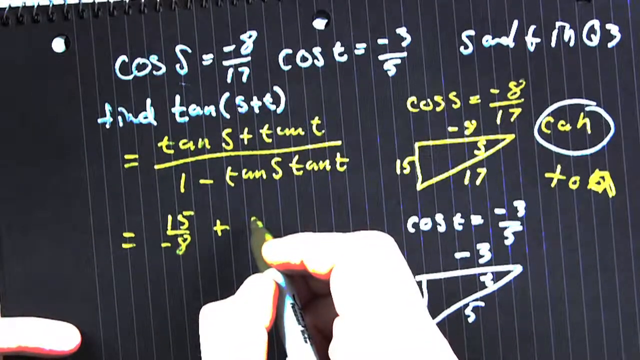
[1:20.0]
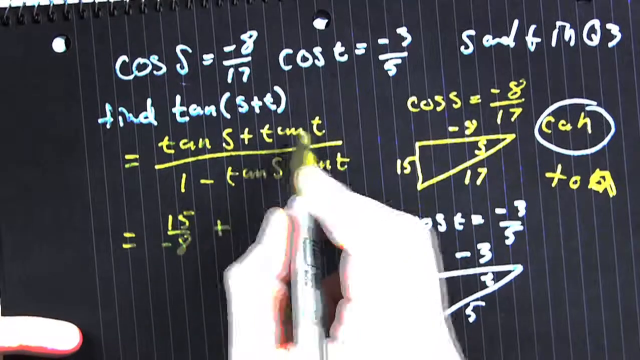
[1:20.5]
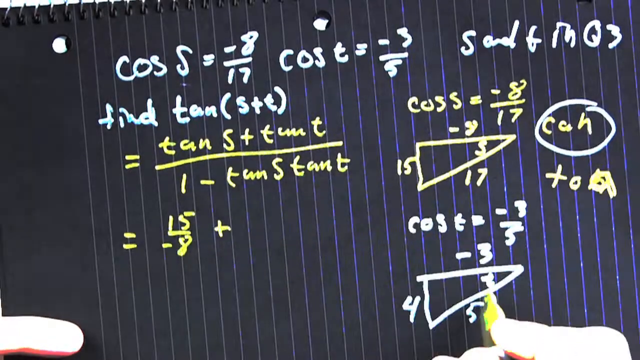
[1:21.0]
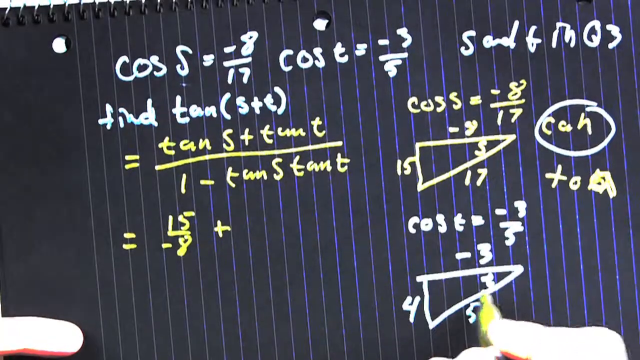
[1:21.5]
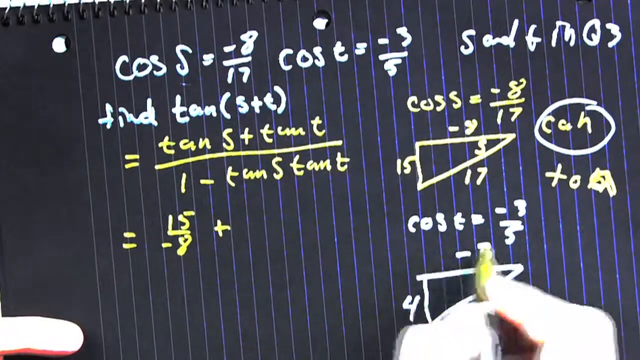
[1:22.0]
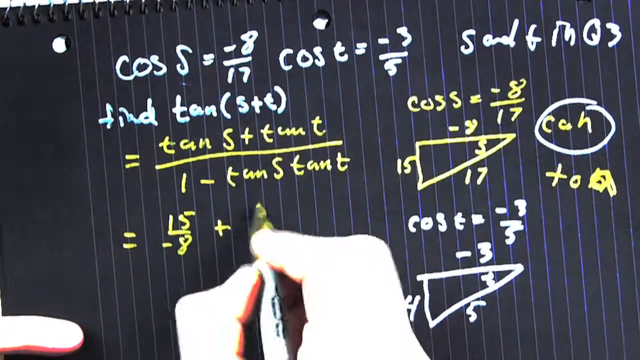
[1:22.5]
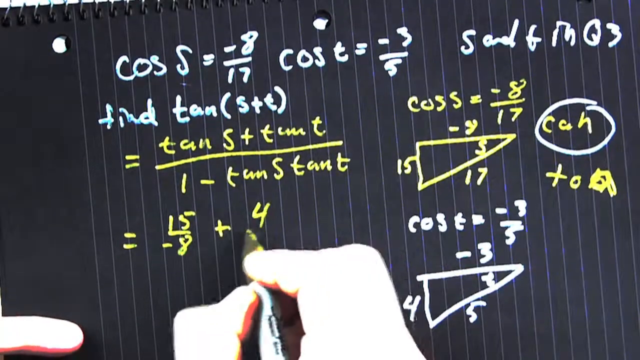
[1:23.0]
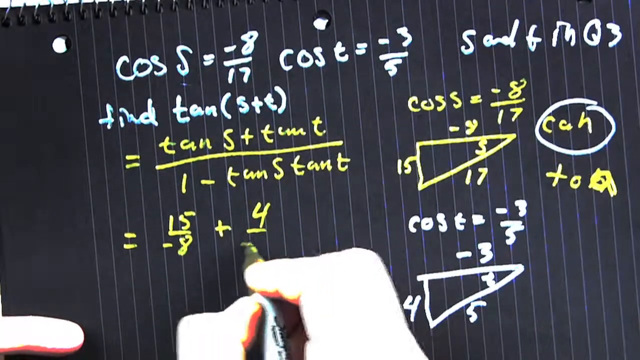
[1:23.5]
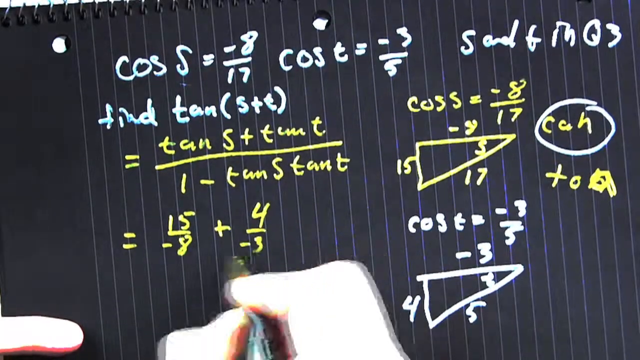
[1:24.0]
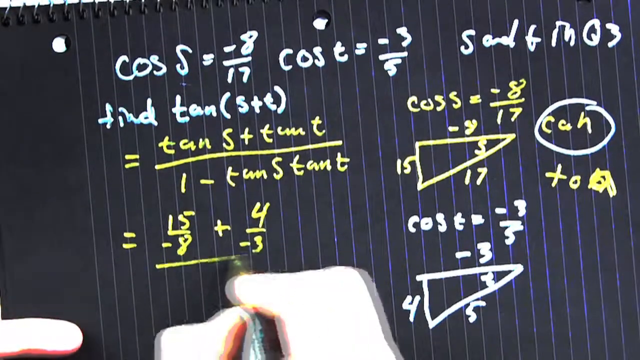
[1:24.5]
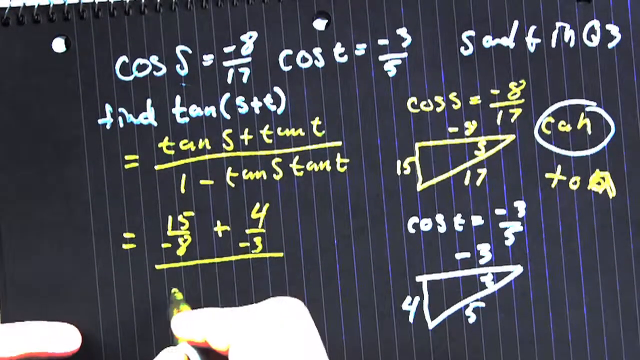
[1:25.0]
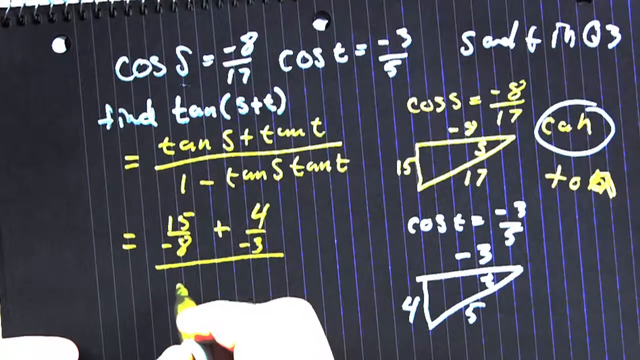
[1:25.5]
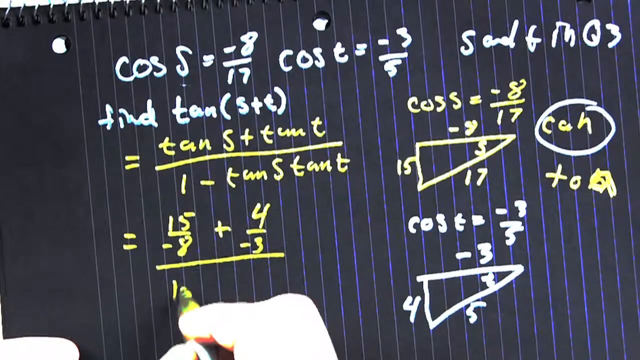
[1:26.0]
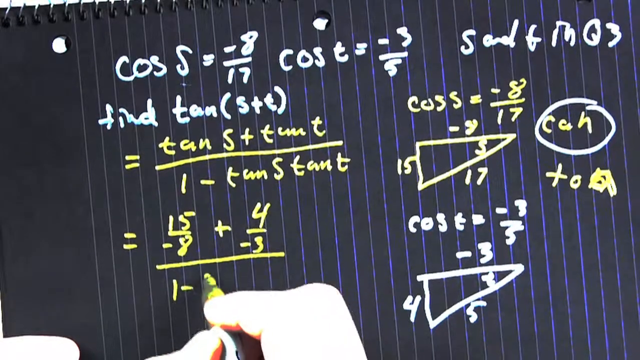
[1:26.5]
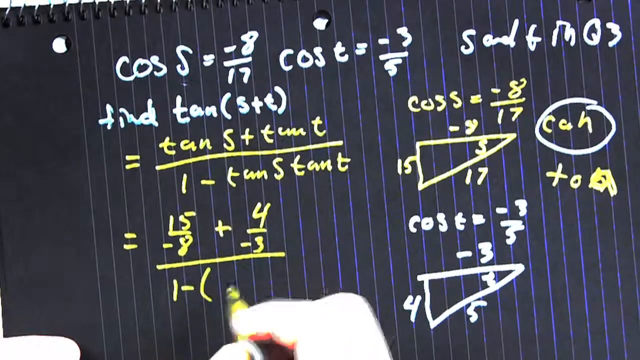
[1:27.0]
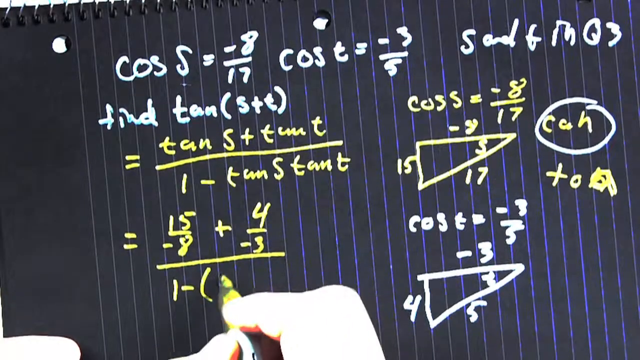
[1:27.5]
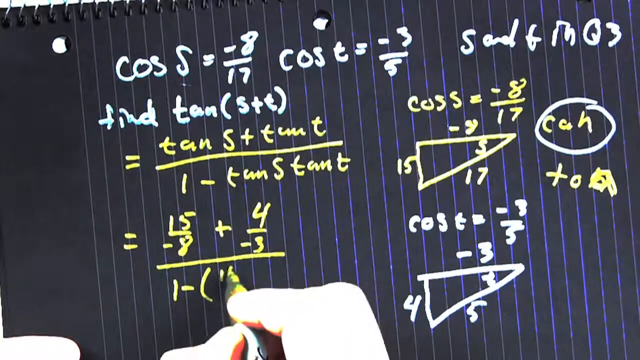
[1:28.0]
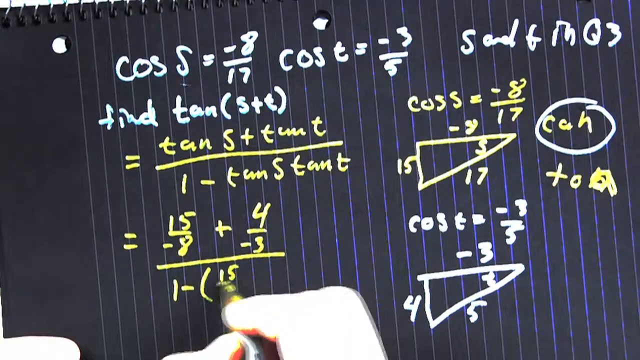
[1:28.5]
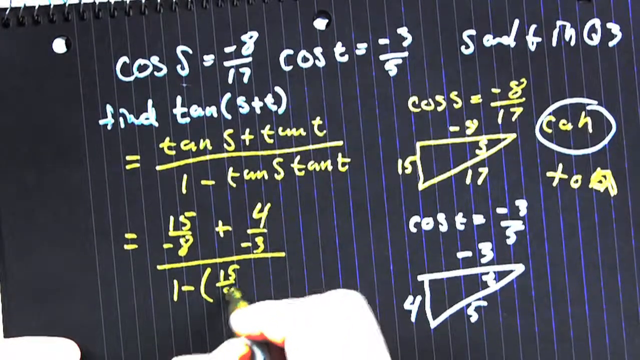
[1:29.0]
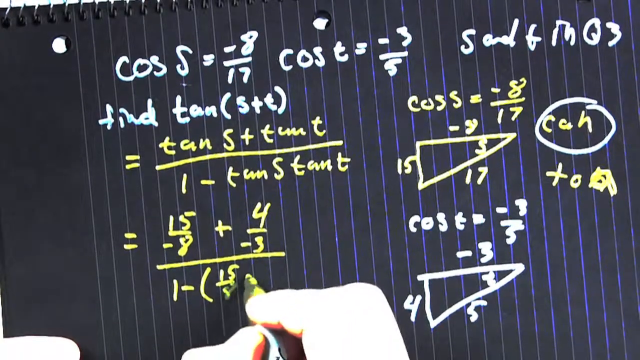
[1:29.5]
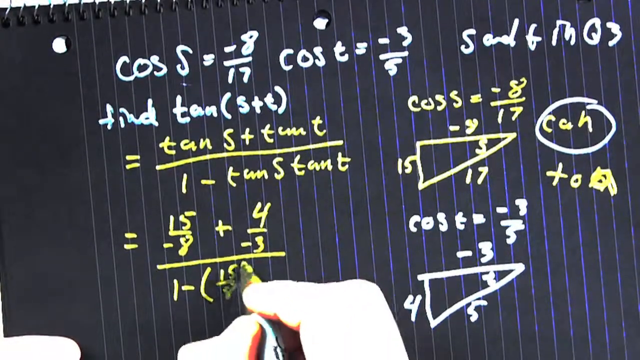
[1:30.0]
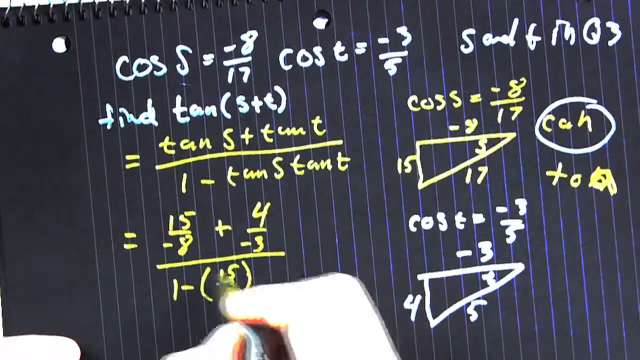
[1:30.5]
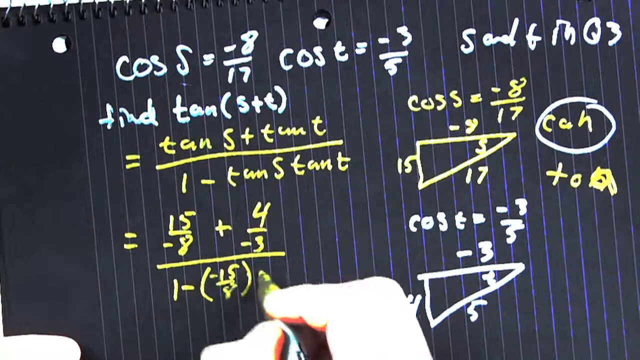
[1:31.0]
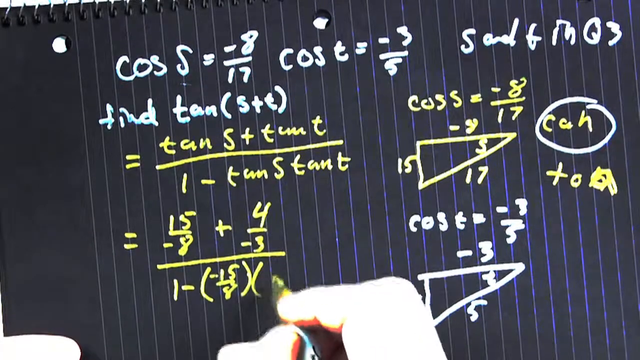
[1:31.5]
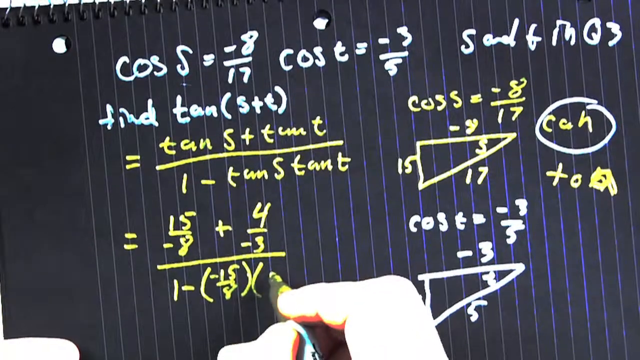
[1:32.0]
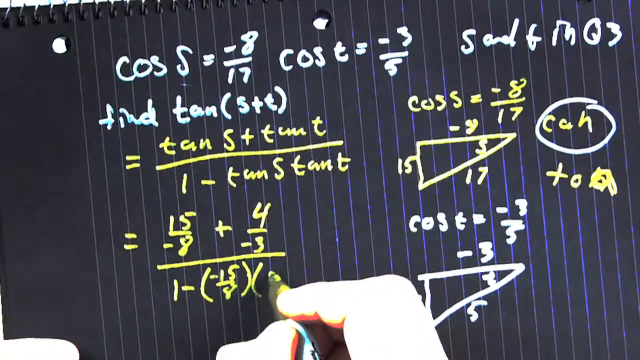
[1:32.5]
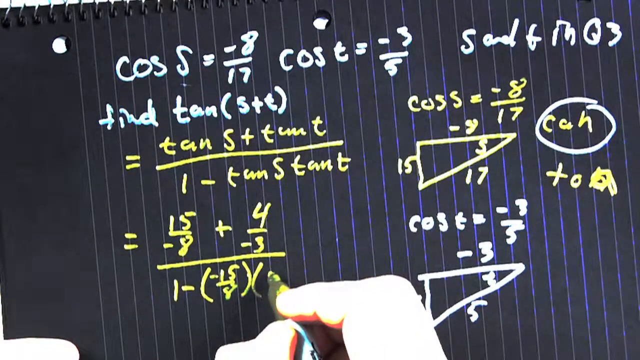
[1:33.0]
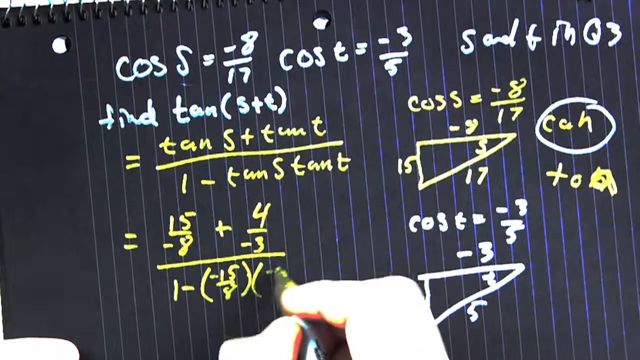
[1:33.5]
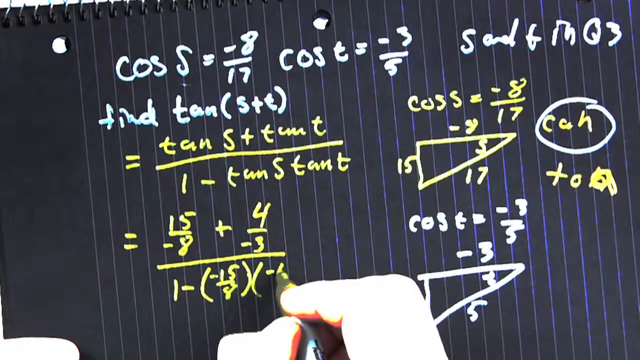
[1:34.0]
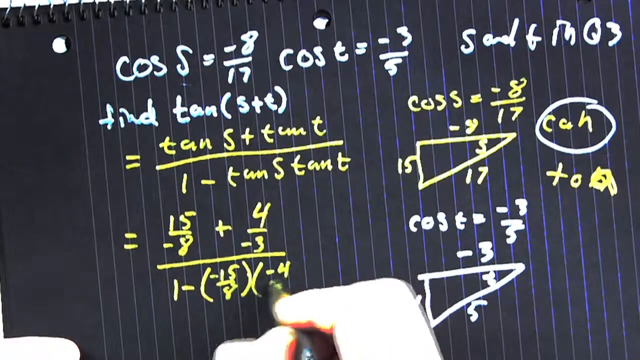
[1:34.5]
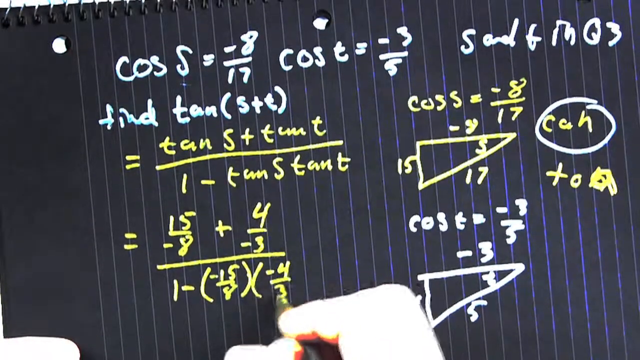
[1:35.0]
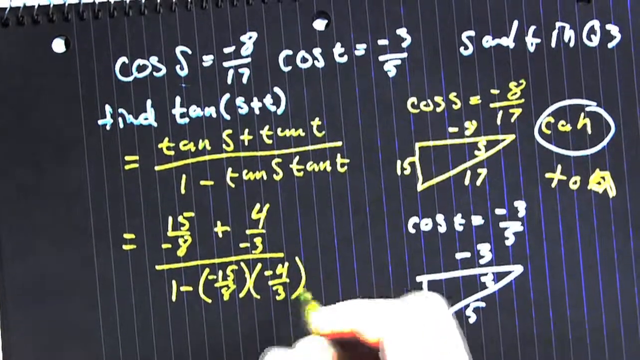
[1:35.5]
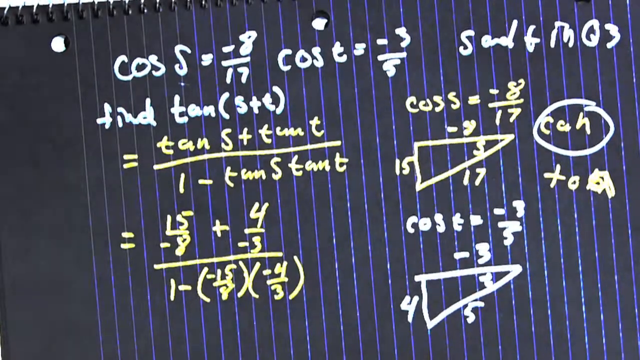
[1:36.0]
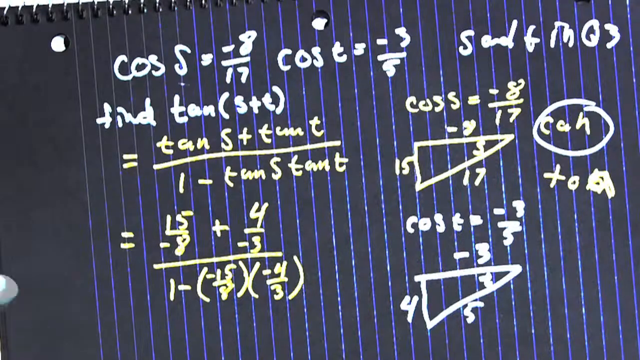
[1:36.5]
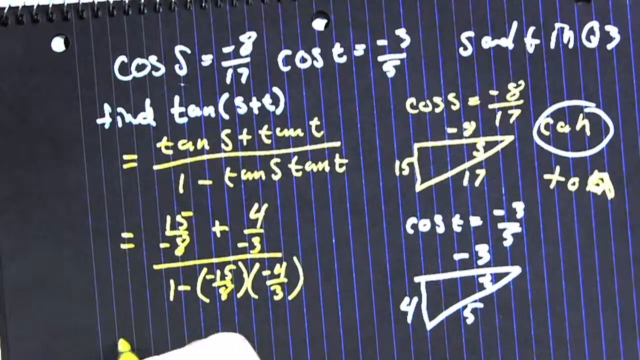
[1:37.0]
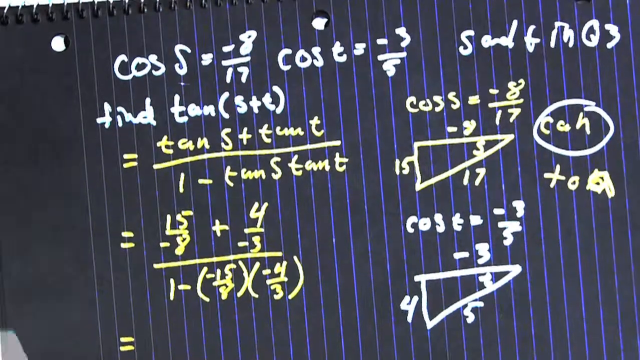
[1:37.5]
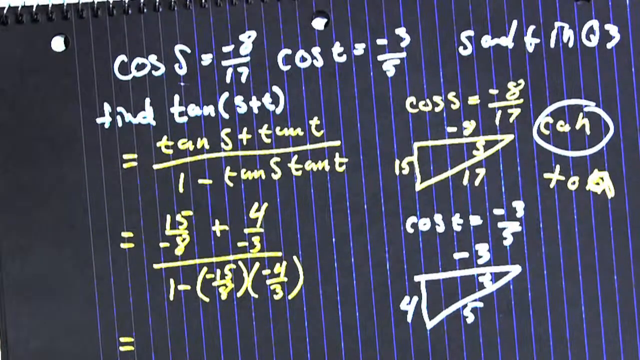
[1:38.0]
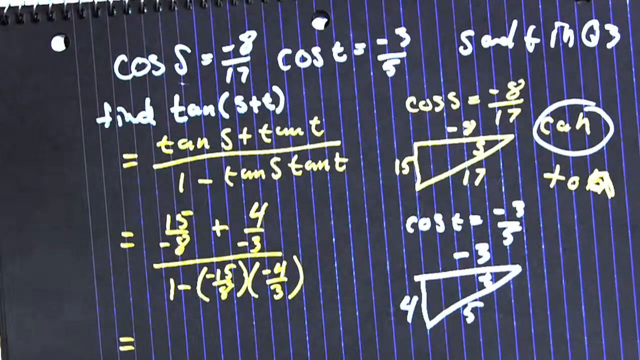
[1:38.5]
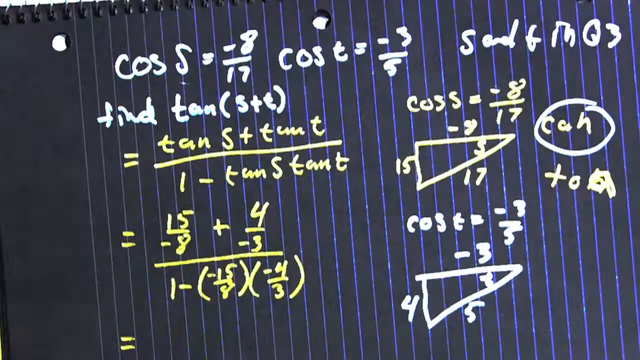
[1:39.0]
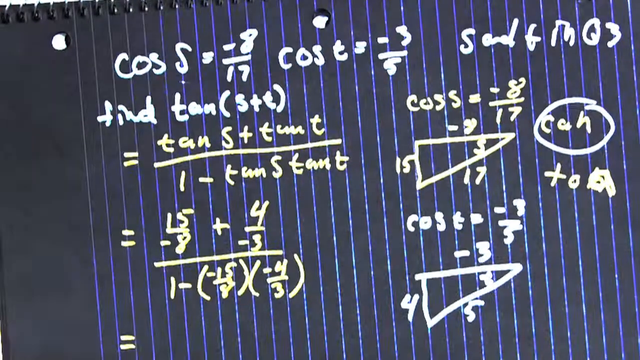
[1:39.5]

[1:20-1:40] The rest of the formula is written by the man with a yellow marker, including 4 to minus 3 and 1 minus 15 to 8 times minus 4 to 3, which ends the long formula. The formula apparently comes from the Pythagoras drawings. The same data of the problem is visible, in yellow and white marker, on the dark piece of paper with lines and some holes in it.